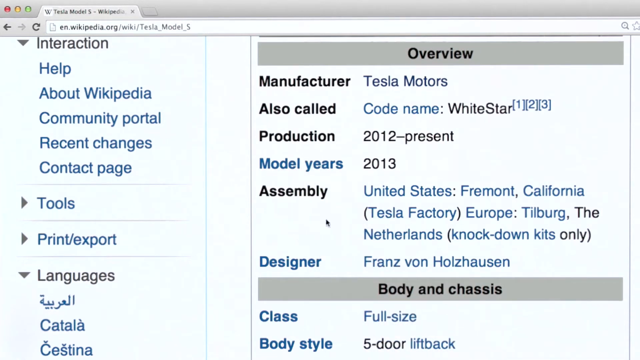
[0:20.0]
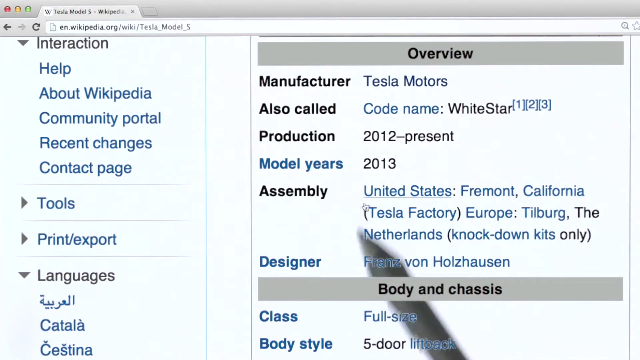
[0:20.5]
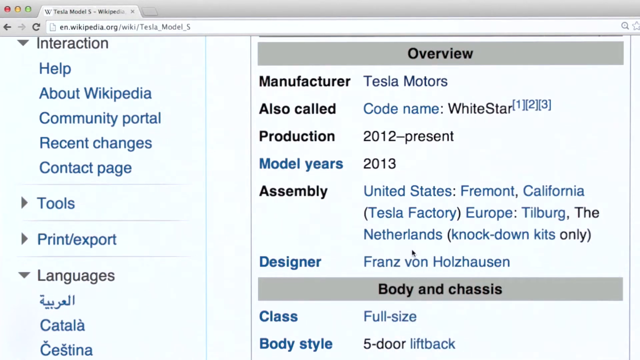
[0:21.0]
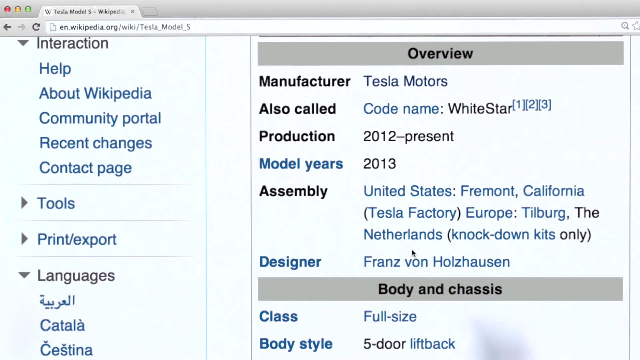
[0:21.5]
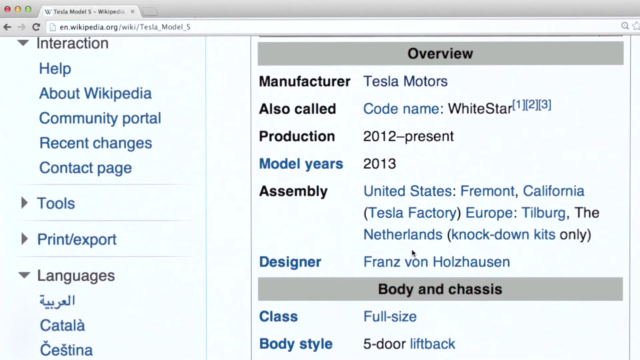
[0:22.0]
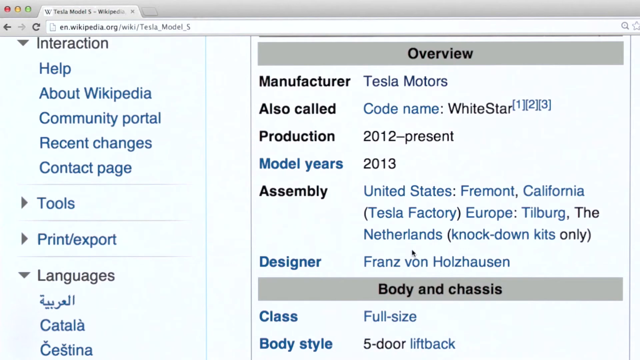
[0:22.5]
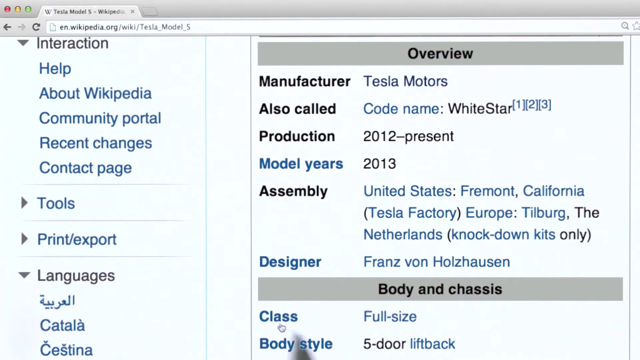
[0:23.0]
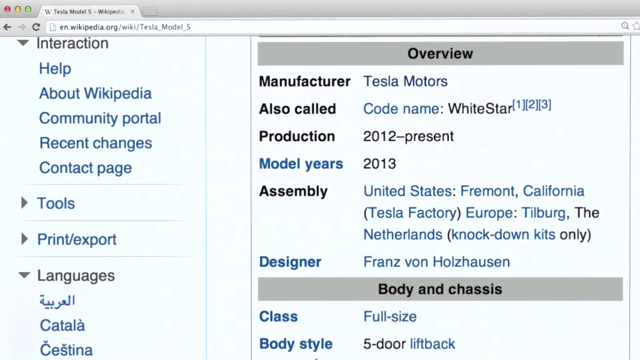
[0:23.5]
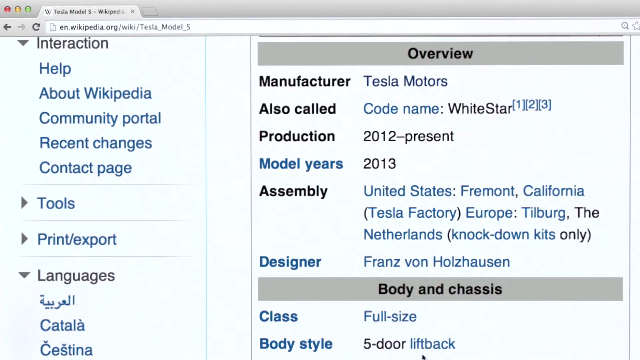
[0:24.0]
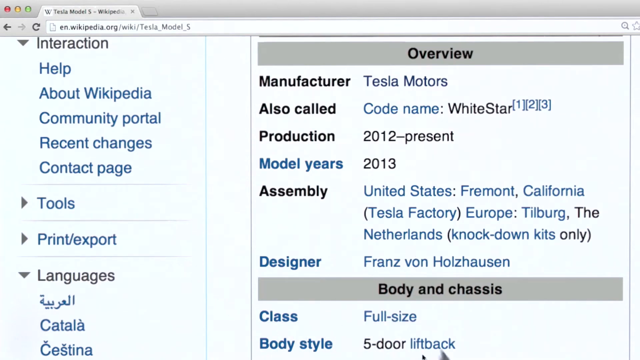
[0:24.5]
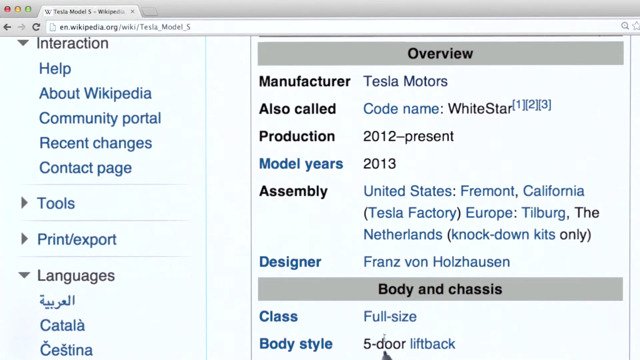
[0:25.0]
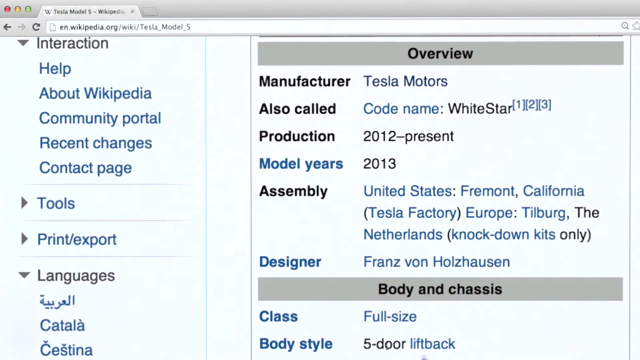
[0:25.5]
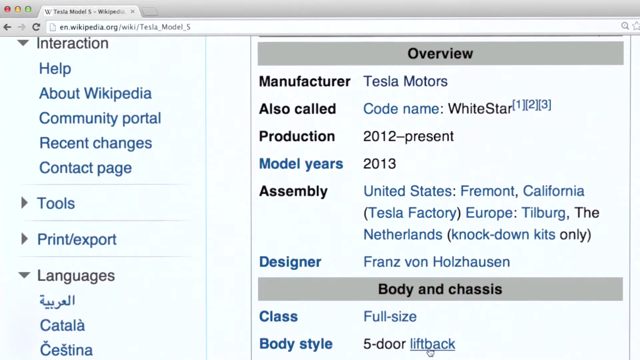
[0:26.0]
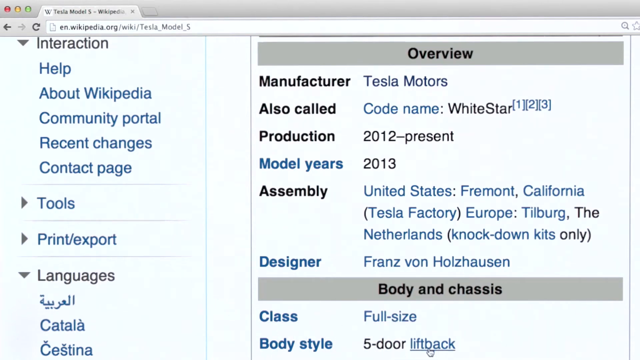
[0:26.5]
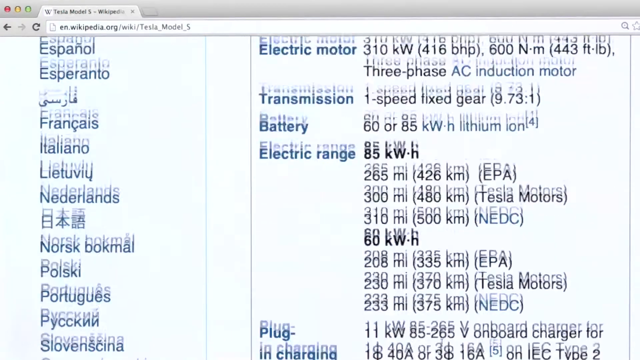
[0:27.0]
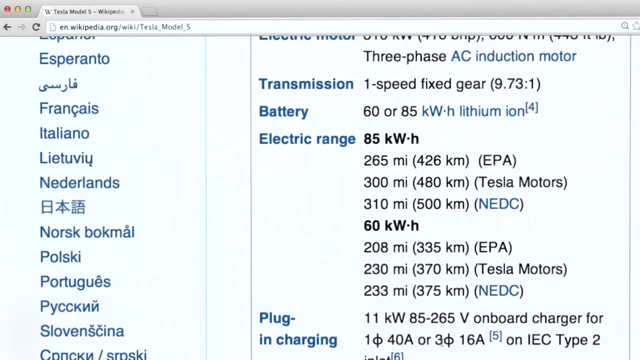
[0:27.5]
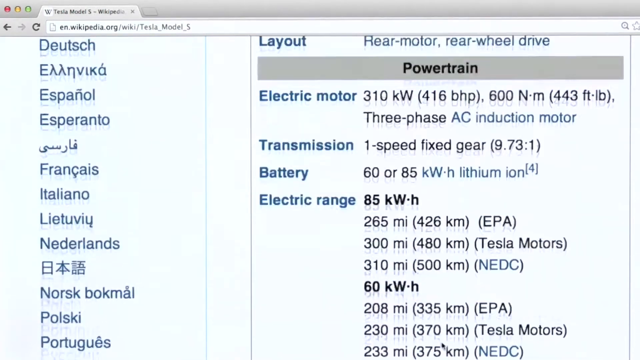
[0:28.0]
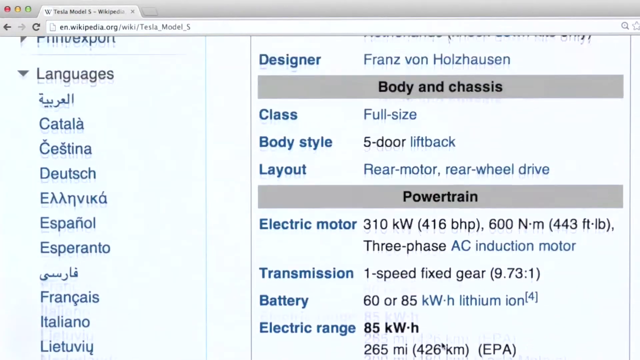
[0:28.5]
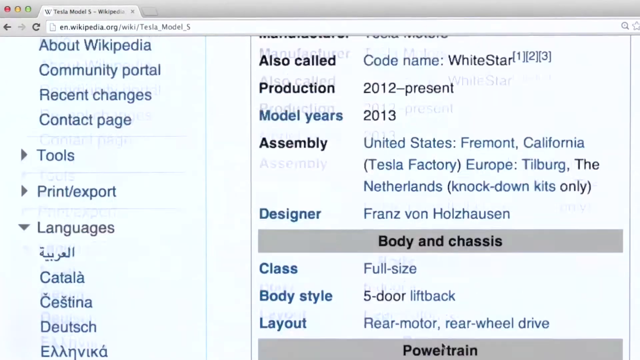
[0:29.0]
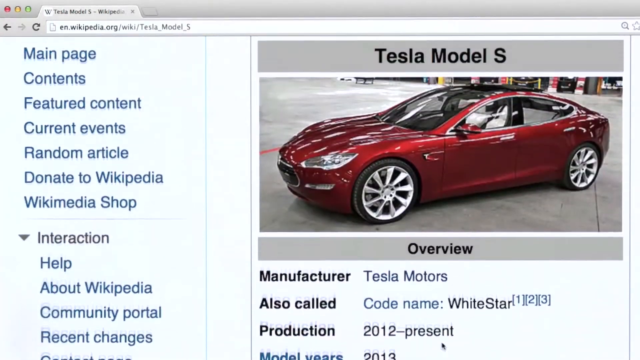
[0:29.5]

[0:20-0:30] The Wikipedia page for the Tesla Model S continues to be viewed, showing different information about the vehicle. Somebody is pointing at the screen with a pen; it seems to be recorded from a distance with a camera rather than captured directly from the screen. On the left are the Wikipedia menu options "interaction", "help", "about Wikipedia", "community portal", "recent changes" and "contact page", with drop-downs for "tools", "print/export" and "languages". On the right is the overview of the vehicle, listing the manufacturer and similar information.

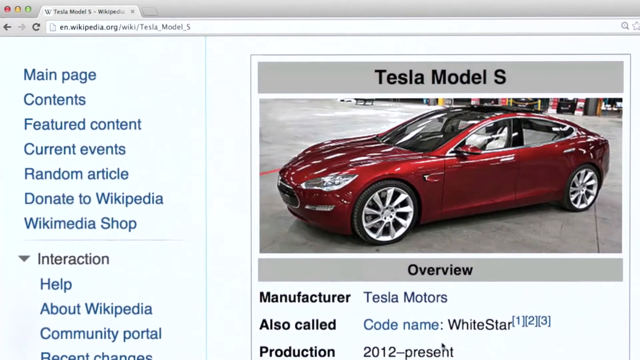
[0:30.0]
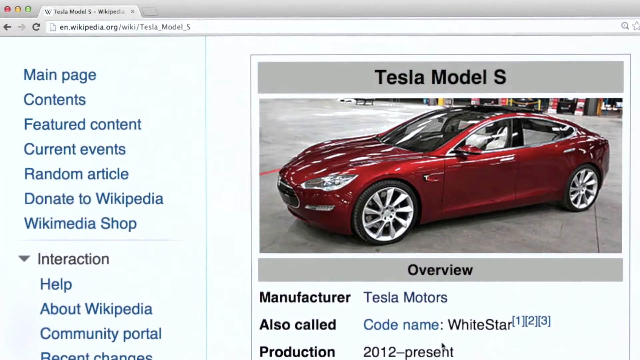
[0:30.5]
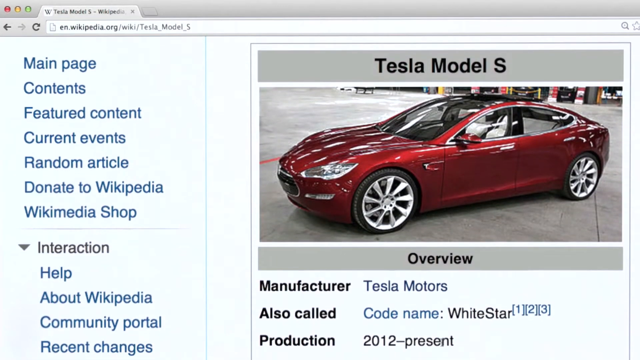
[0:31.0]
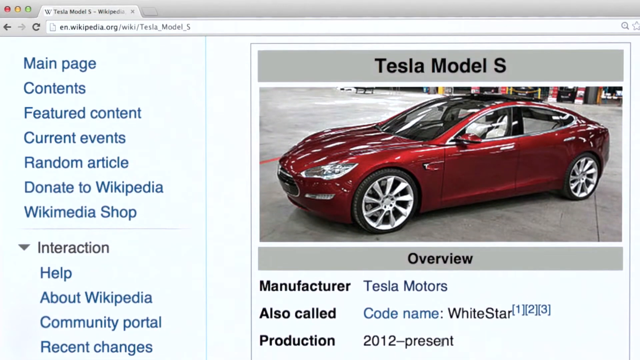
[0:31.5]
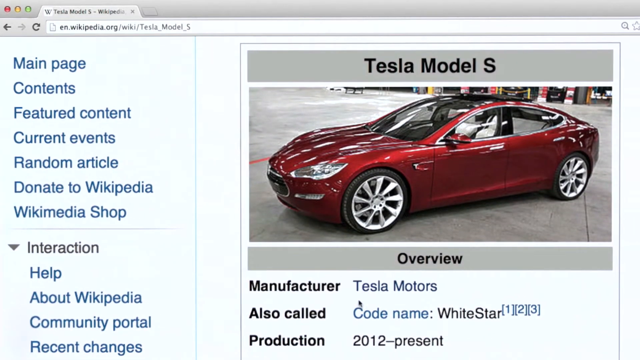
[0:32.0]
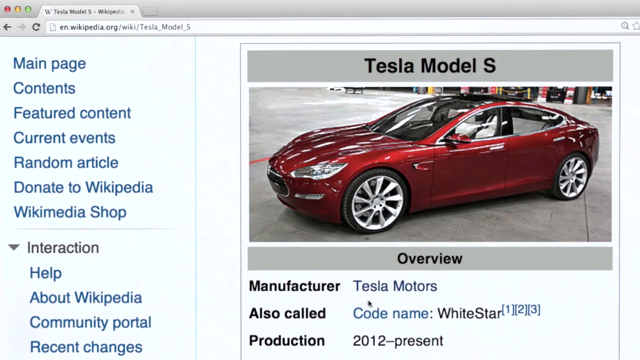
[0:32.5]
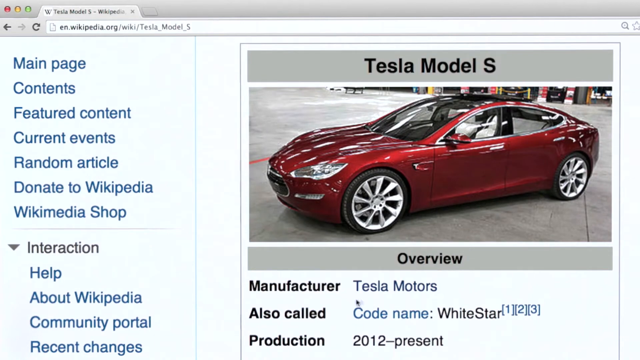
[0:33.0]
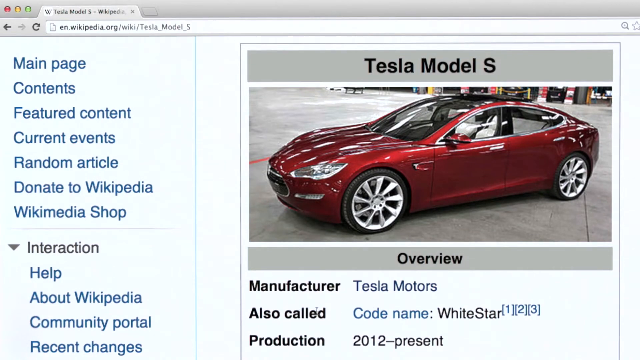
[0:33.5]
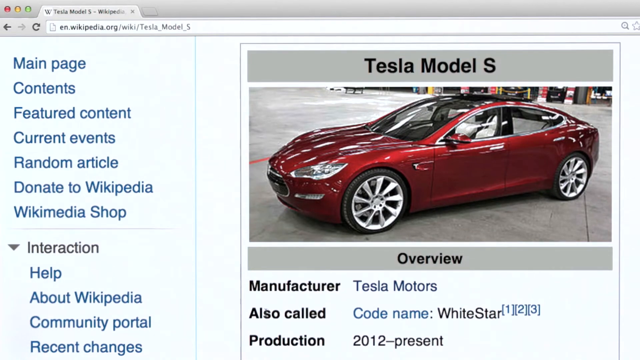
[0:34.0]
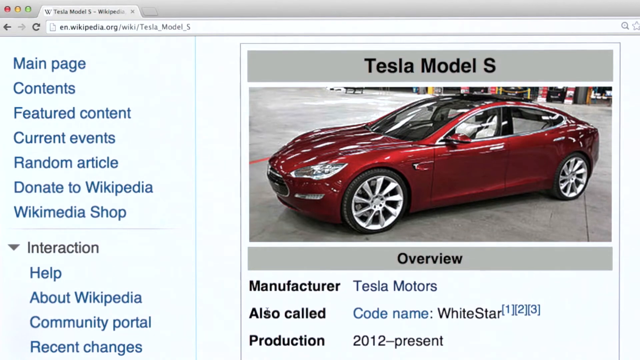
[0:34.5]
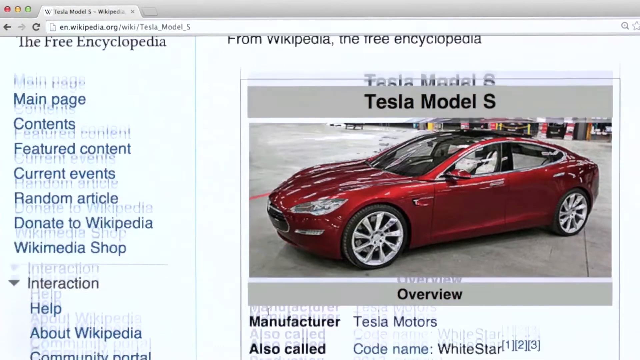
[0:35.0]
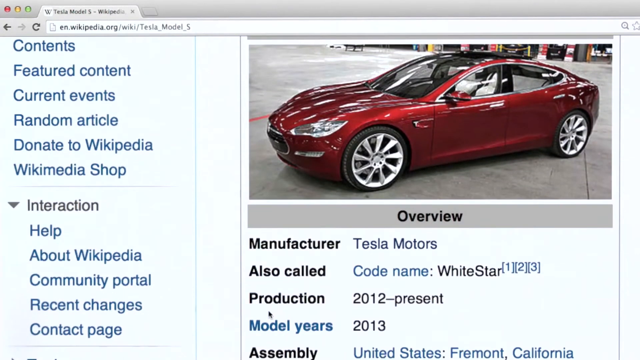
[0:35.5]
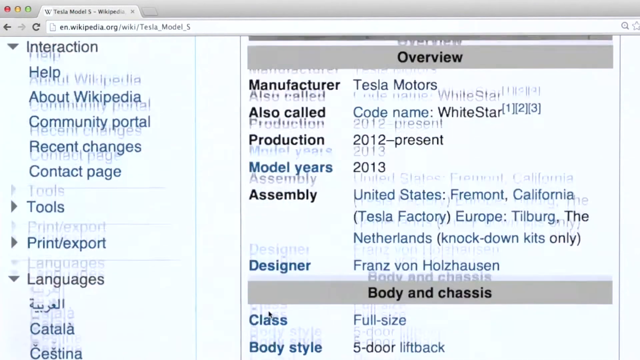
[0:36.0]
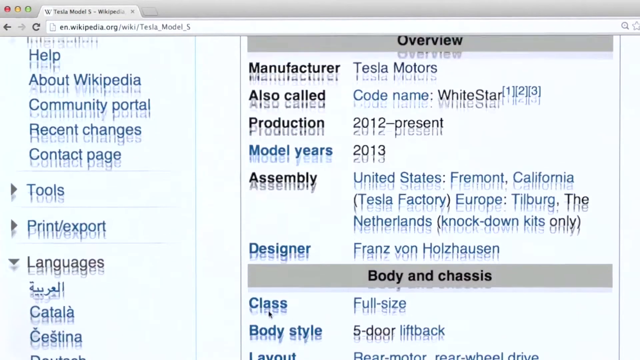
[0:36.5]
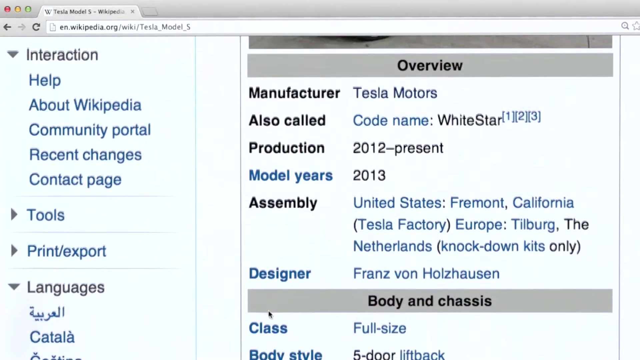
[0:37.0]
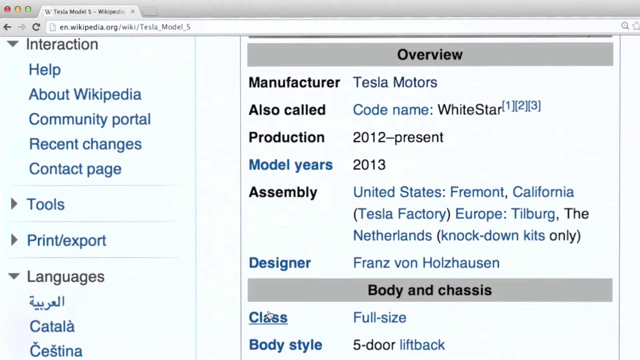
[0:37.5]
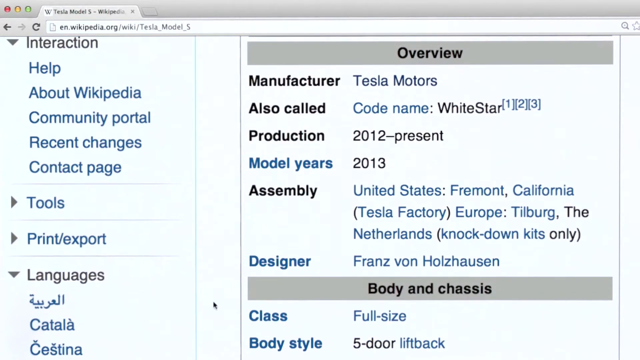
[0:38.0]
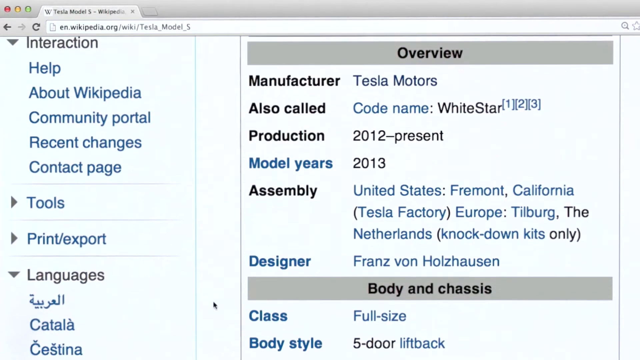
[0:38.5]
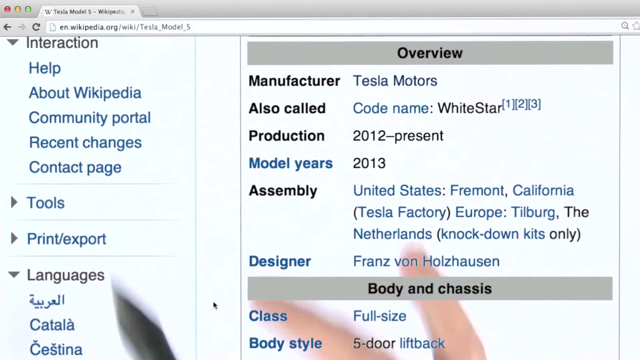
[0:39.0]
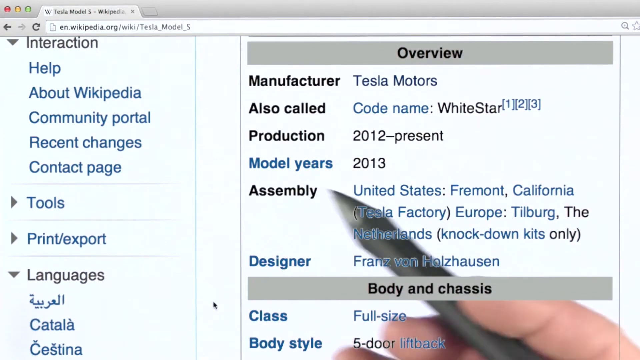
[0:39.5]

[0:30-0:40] The Wikipedia page for the Tesla Model S is still being explored. A cursor is now on the screen, scrolling up and down over different parts of the page, while someone still points at it with a pen. The overview shows the manufacturer, the production years, the places where the car is assembled and the designer's name, with the standard Wikipedia menu options on the left. The person seems to be just looking at this section of the article.